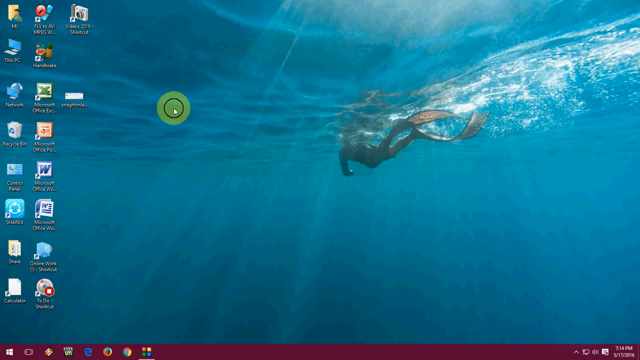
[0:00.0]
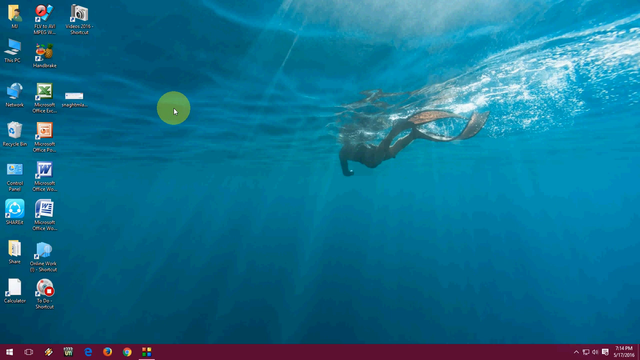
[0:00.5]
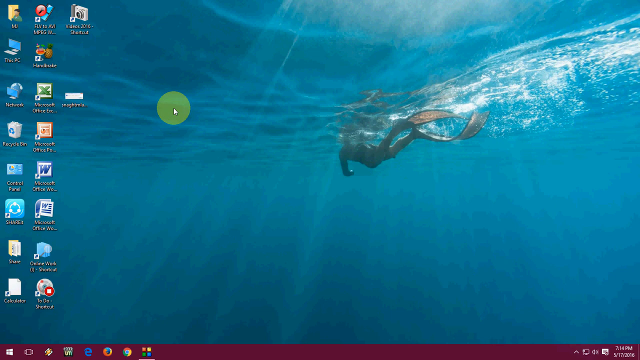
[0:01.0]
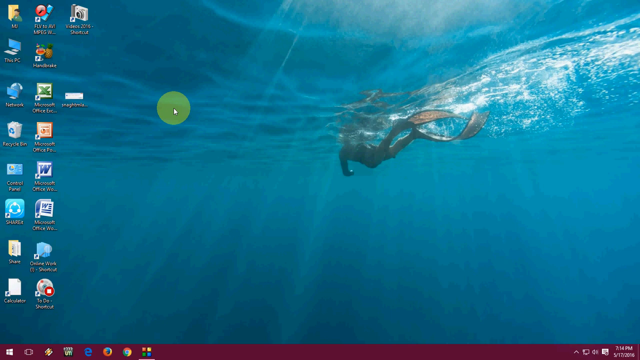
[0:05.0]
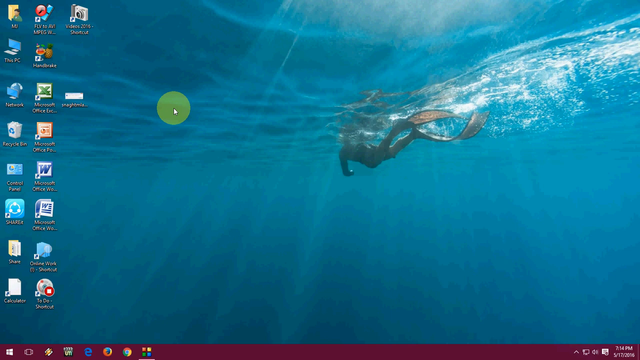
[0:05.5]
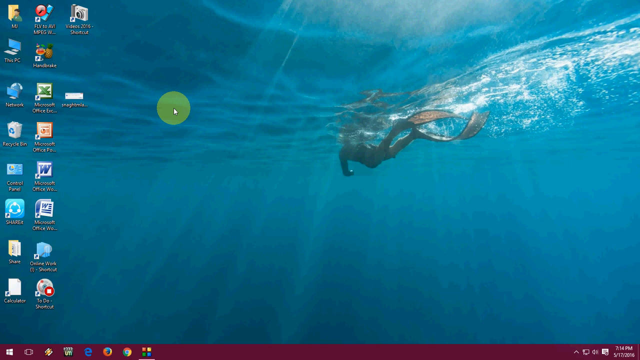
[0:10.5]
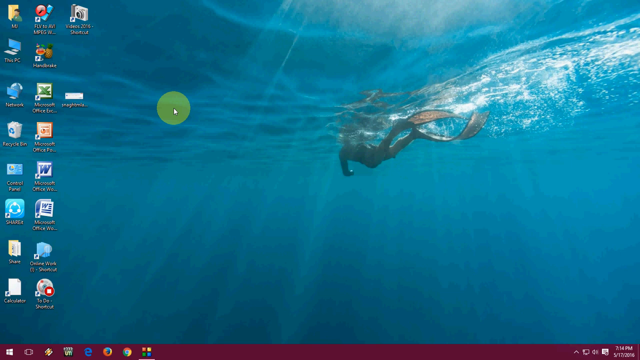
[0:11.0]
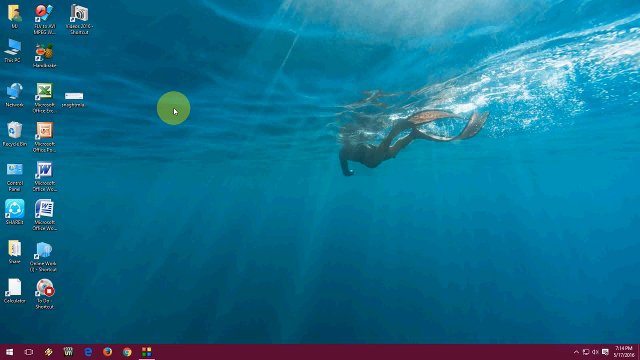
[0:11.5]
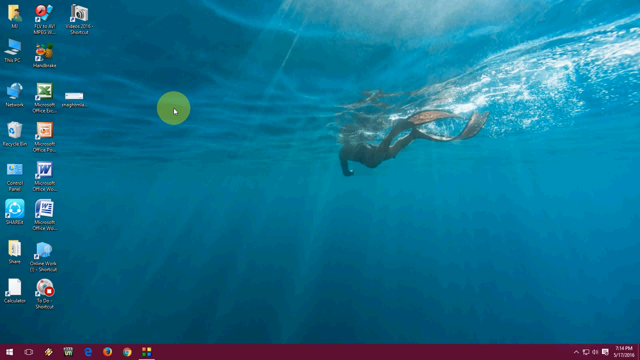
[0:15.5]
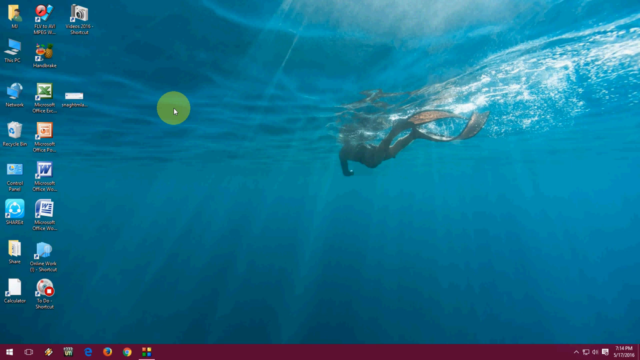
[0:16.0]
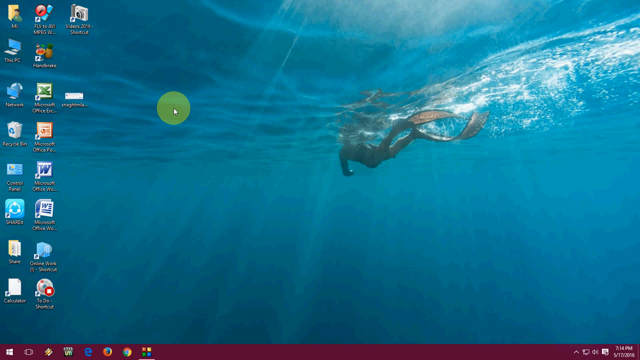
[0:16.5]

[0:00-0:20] A Windows computer screen shows a desktop background of a person wearing flippers on their feet swimming across the ocean, with light shining in through the blue water; the water in the photo is calm. Applications are on the left side of the screen, and the mouse cursor, with a yellow halo around it, hovers on the left side and stays in that same spot. The desktop items appear to include a "Videos 2016" shortcut, This PC, Network, Recycle Bin and a Control Panel shortcut. The toolbar at the bottom of the screen shows Internet Explorer, Firefox, Mozilla, Google Chrome, Microsoft Office and Word, along with the Windows logo.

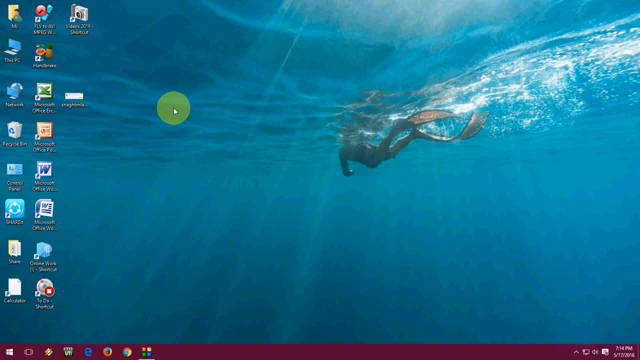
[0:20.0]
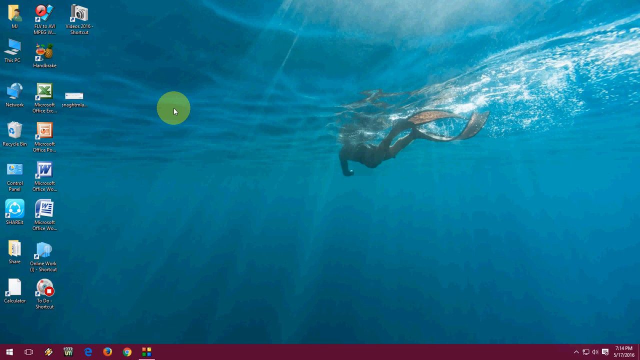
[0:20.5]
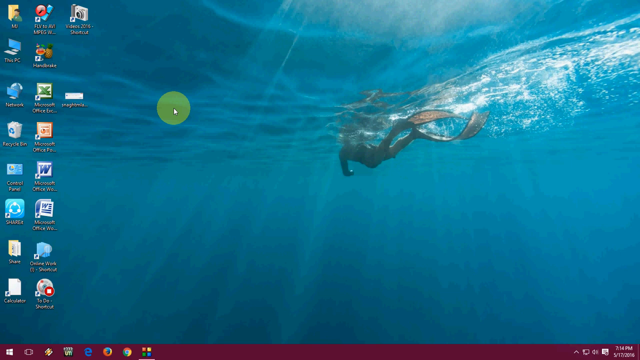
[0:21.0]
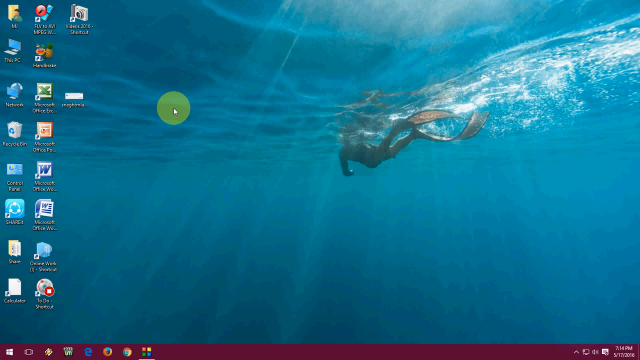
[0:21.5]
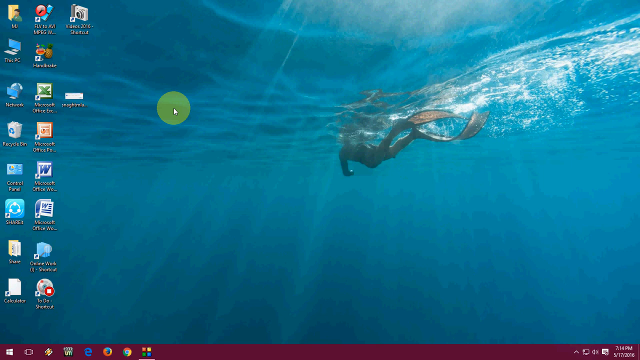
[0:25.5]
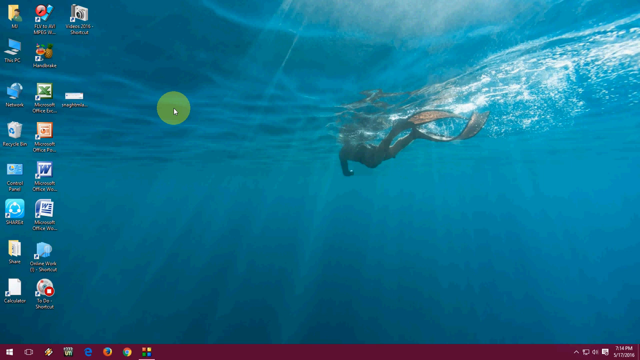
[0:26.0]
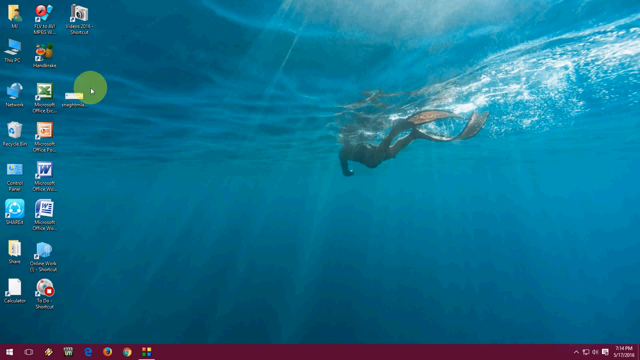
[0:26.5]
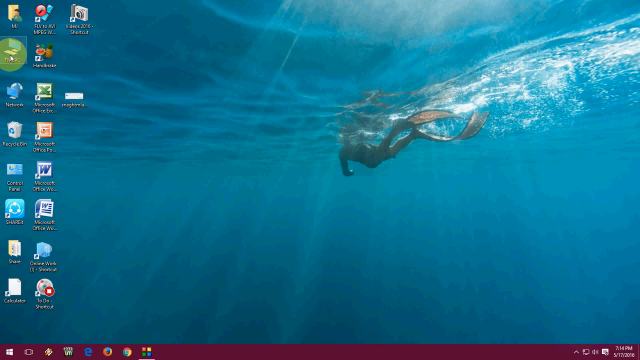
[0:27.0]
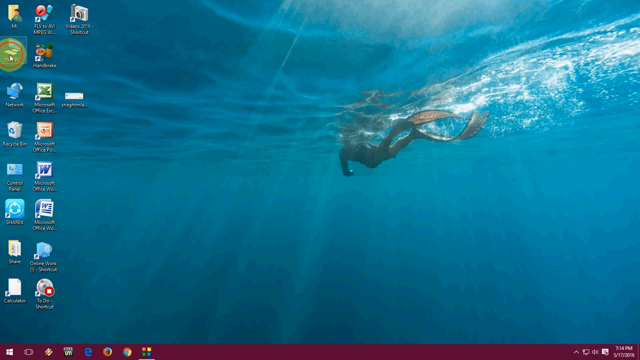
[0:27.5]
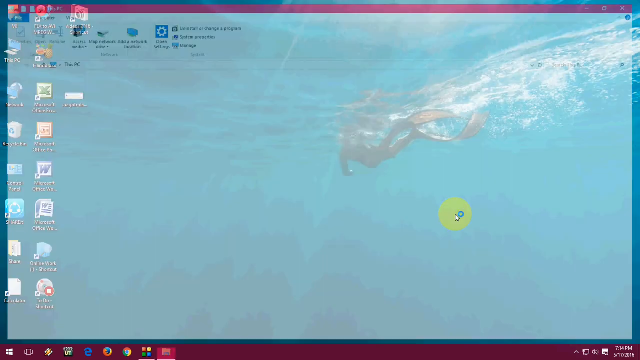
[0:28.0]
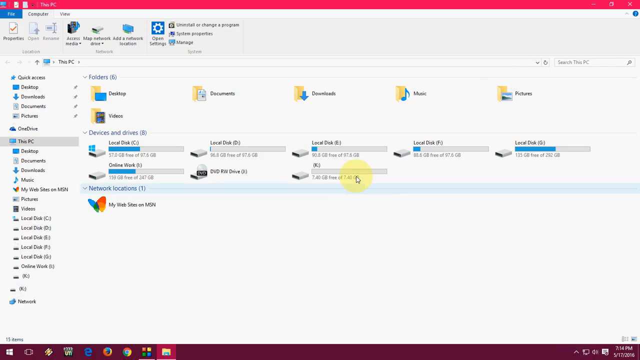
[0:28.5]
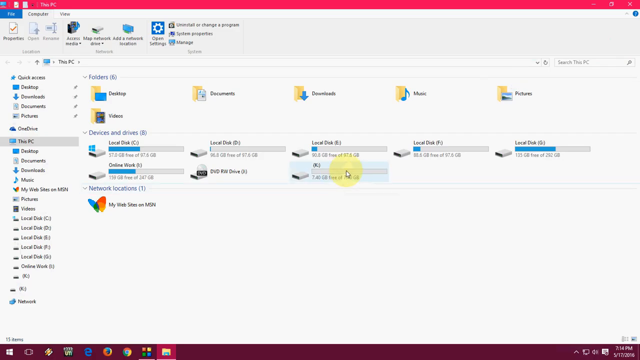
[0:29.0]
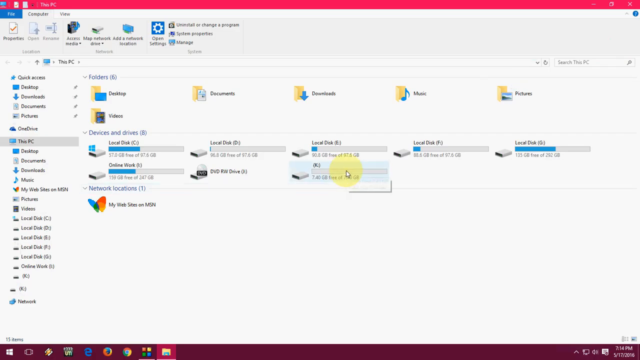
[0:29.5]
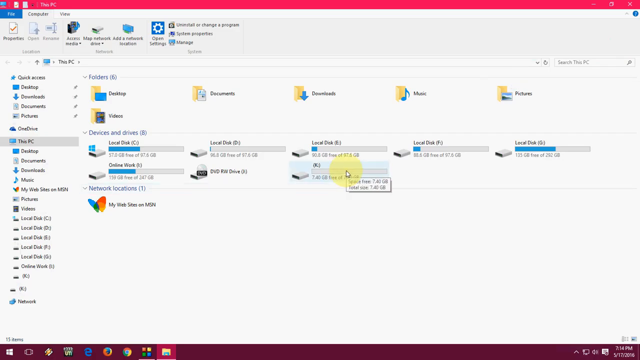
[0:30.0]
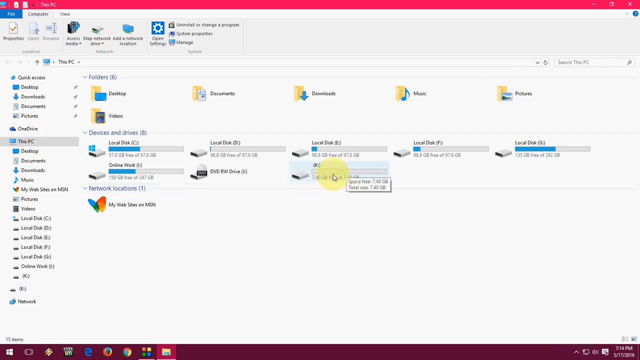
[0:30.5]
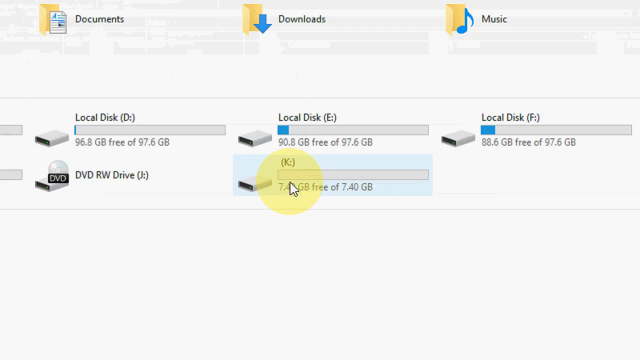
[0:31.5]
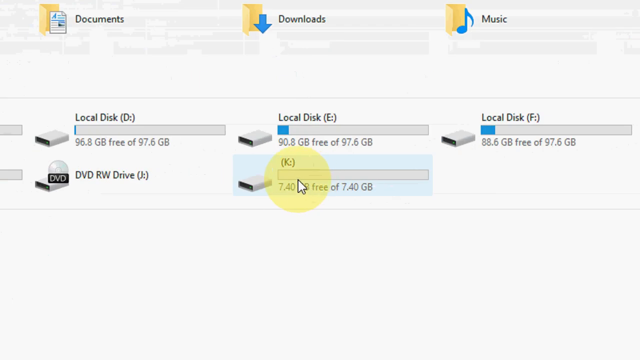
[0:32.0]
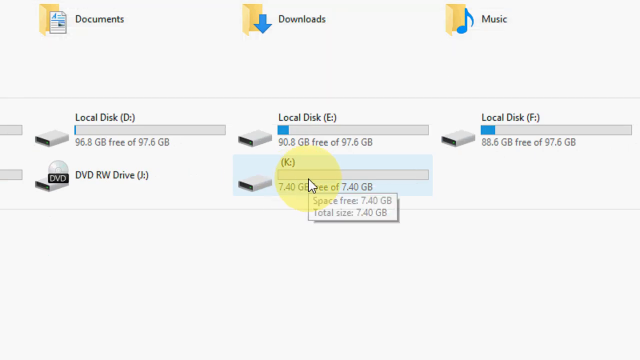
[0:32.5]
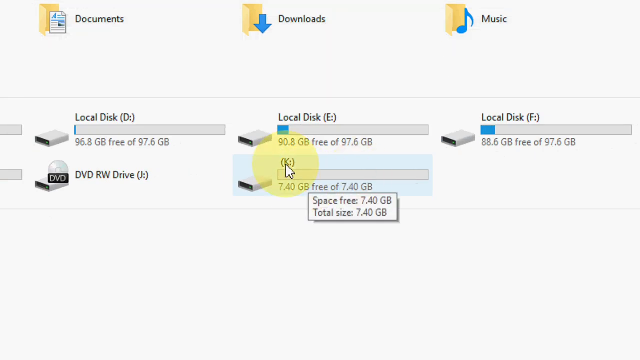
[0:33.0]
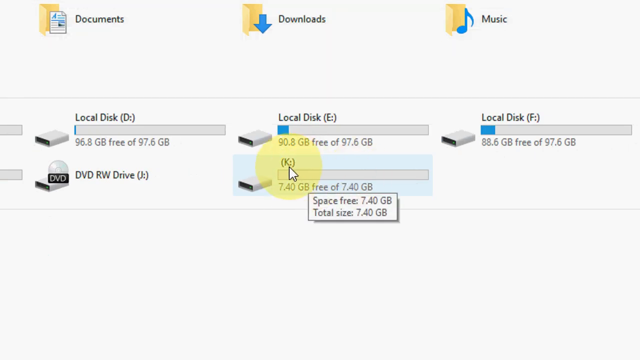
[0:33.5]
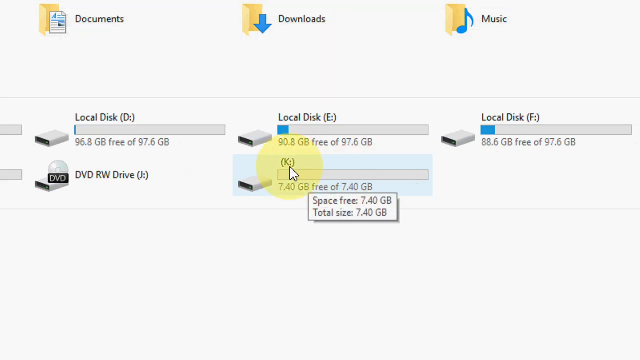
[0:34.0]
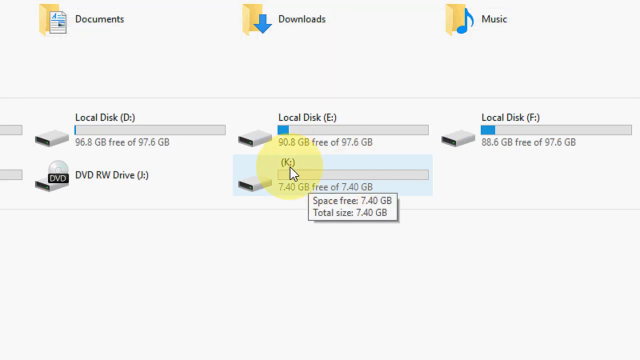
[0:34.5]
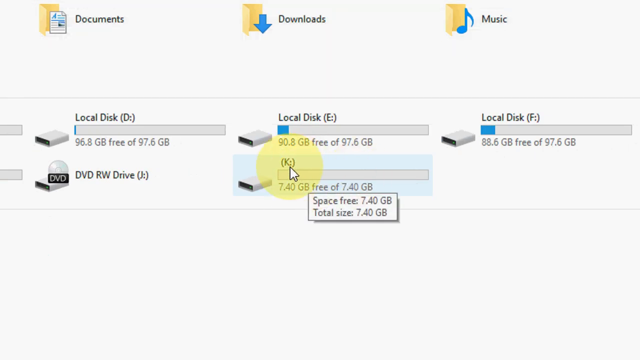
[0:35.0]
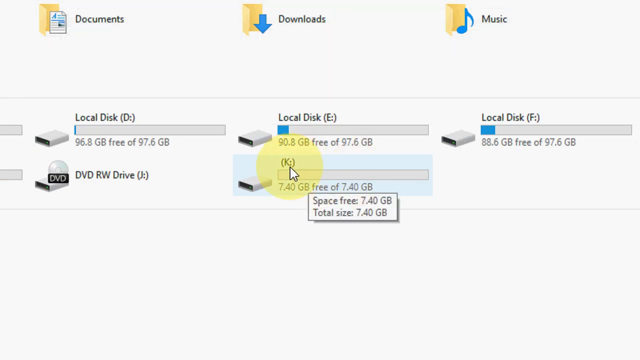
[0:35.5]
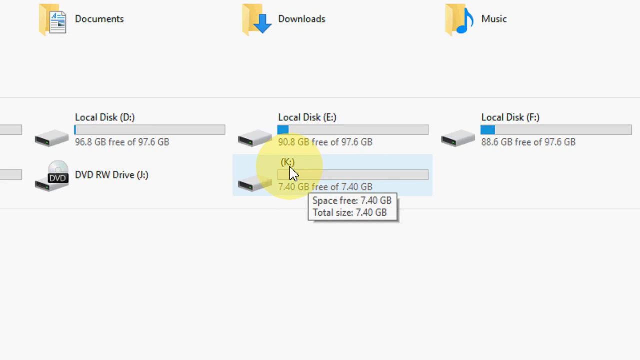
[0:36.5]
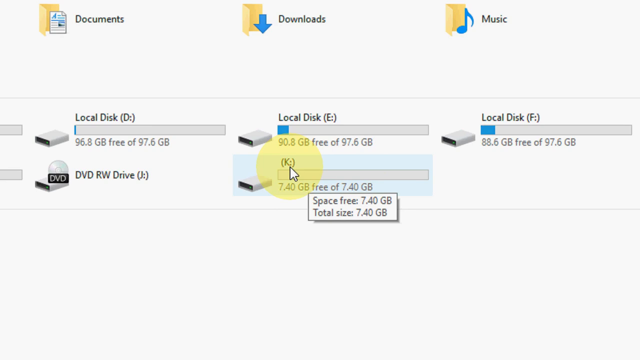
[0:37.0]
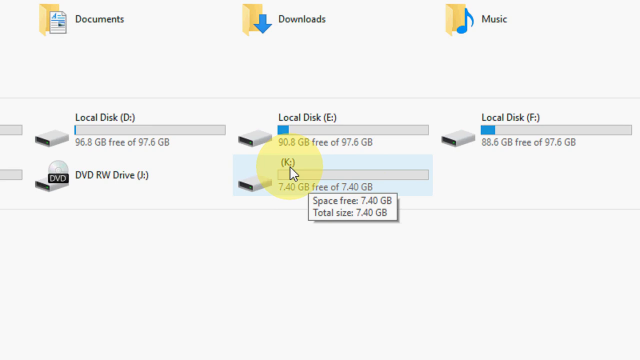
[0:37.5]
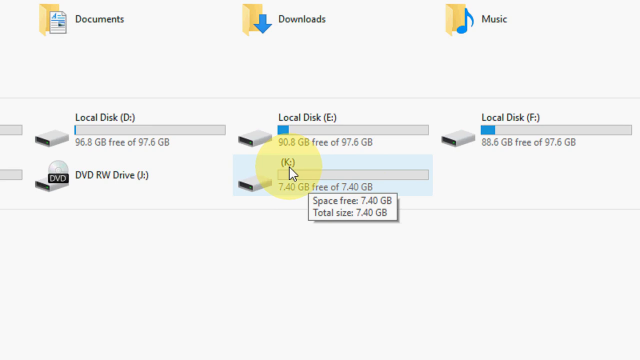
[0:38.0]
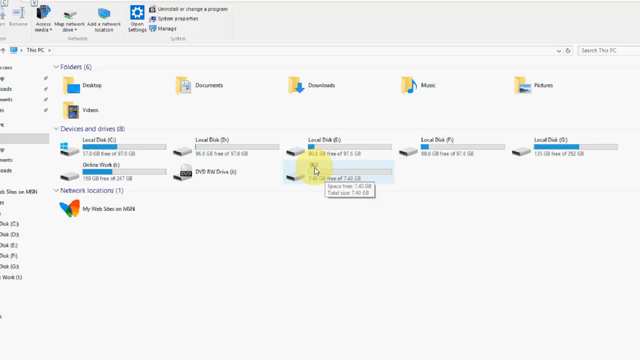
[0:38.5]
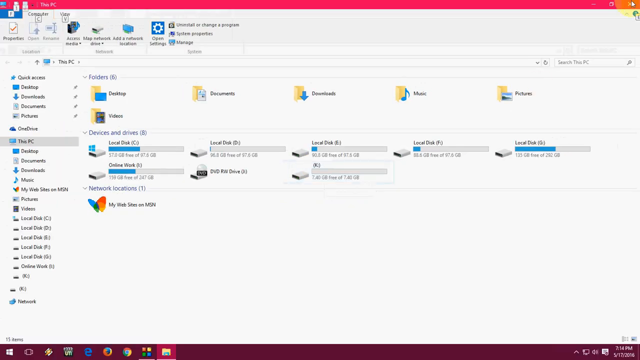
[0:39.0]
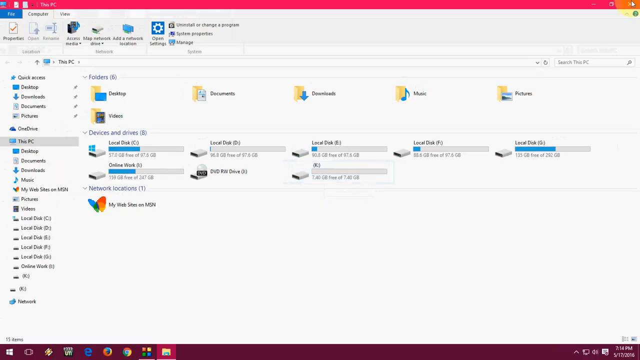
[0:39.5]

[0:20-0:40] The Windows screen remains, with the background of the person in flippers moving across clean, clear water as light shines in, and the applications on the left side. The view cuts as the person double-clicks This PC, which shows the devices and drives section, folders and network locations. Under devices and drives there are five local disks, an online work DVD and another drive. The person clicks on the K drive, which has 7.4 gigabytes free, then zooms in on this section and hovers over it. The This PC window also shows Quick access, Desktop, Downloads, Documents, Pictures, Music, Videos and OneDrive. The person then closes the This PC window.